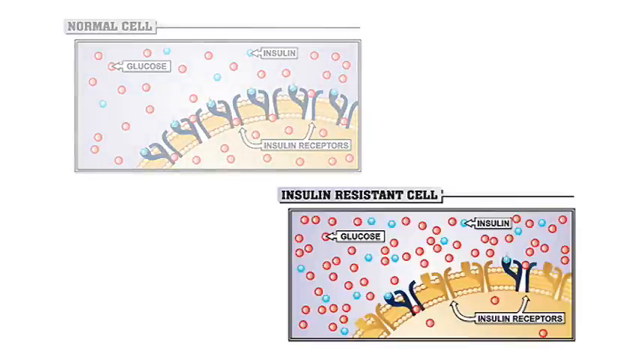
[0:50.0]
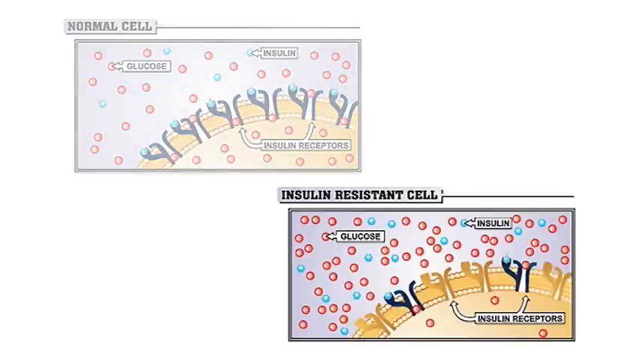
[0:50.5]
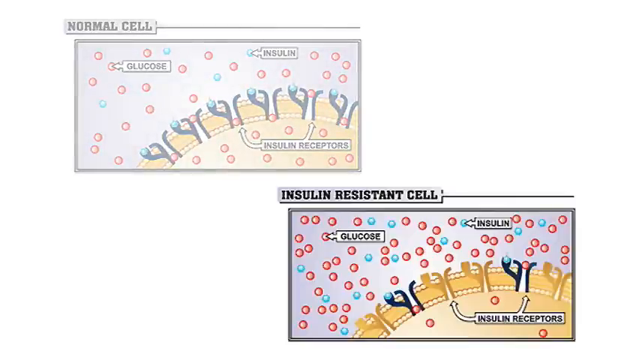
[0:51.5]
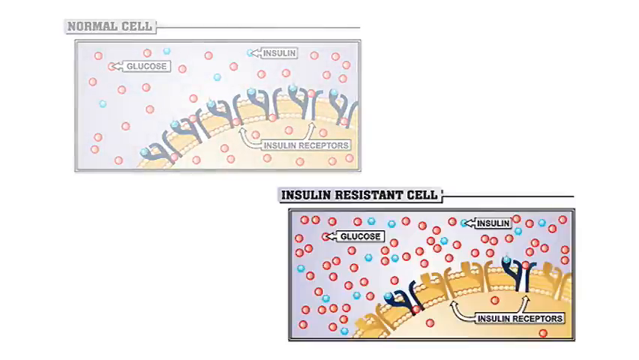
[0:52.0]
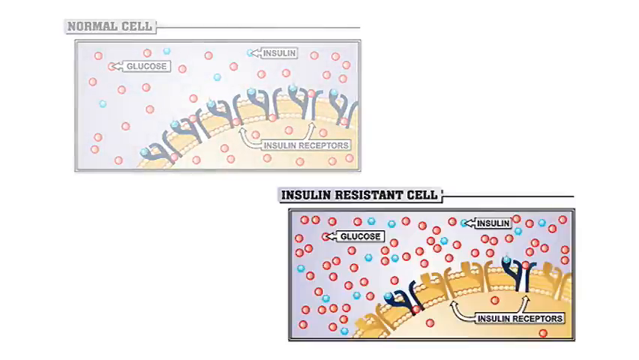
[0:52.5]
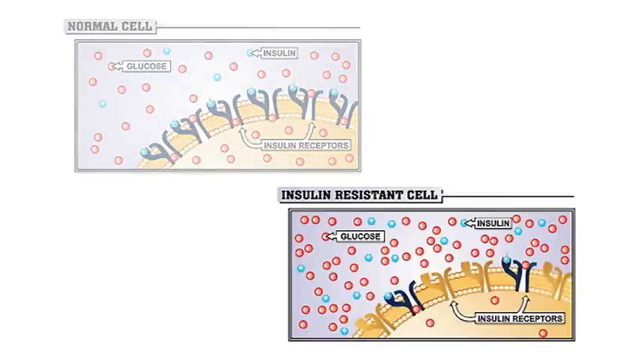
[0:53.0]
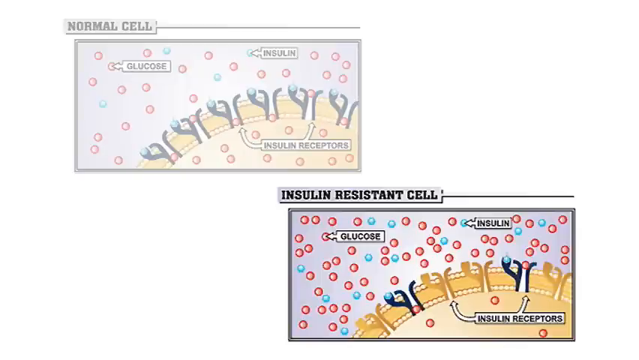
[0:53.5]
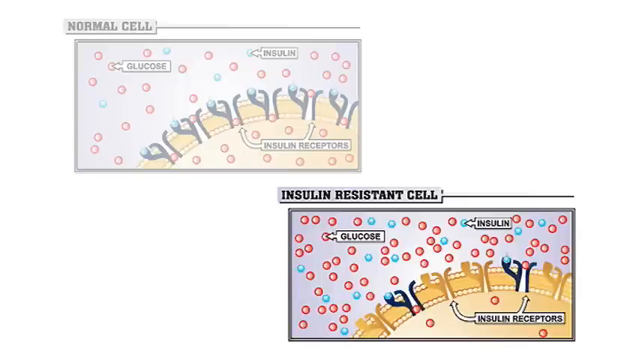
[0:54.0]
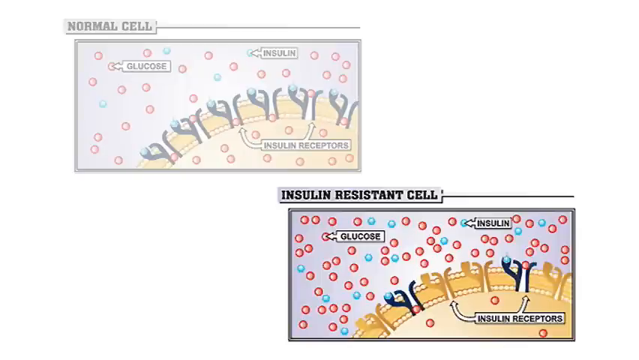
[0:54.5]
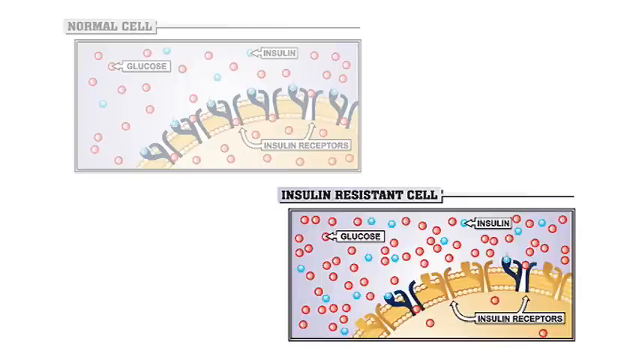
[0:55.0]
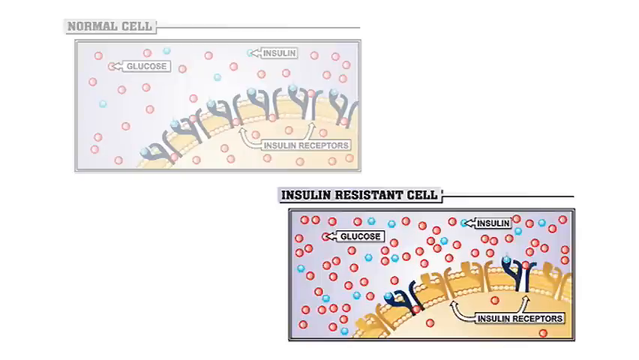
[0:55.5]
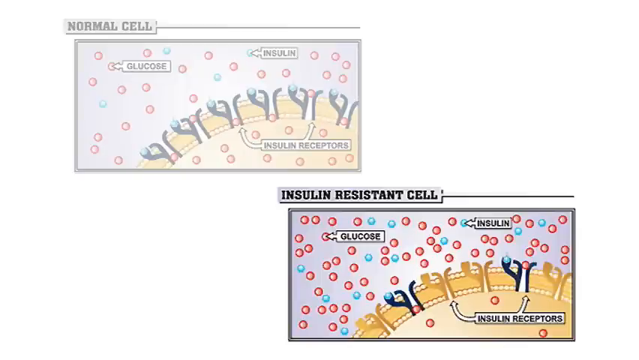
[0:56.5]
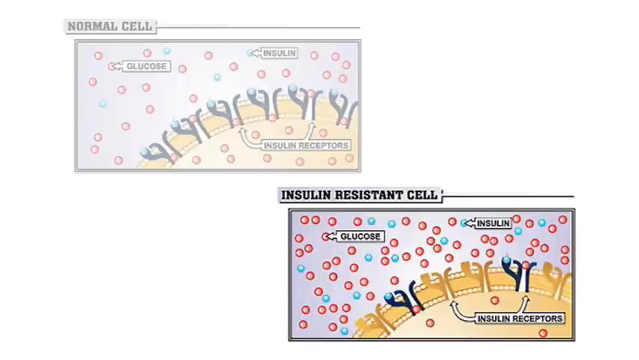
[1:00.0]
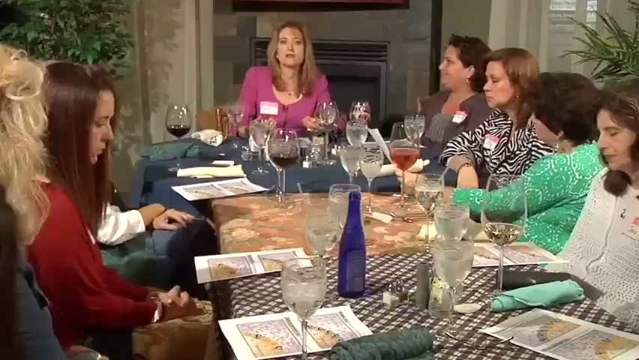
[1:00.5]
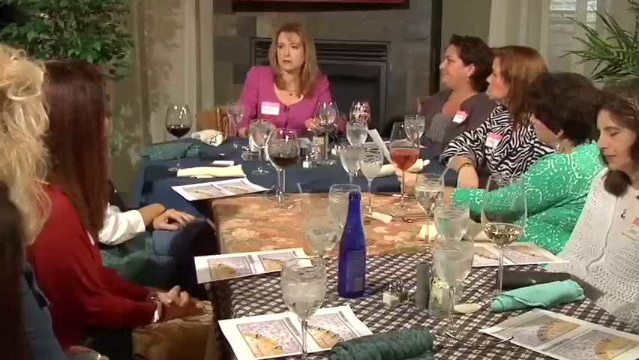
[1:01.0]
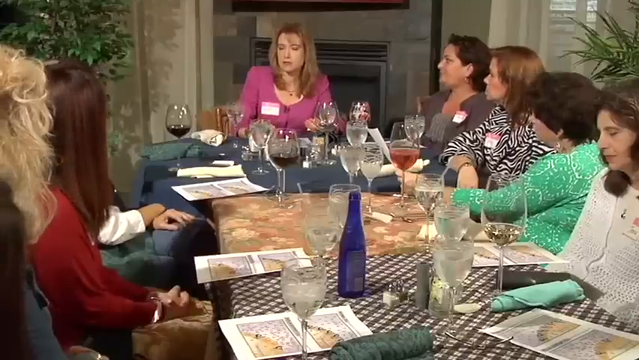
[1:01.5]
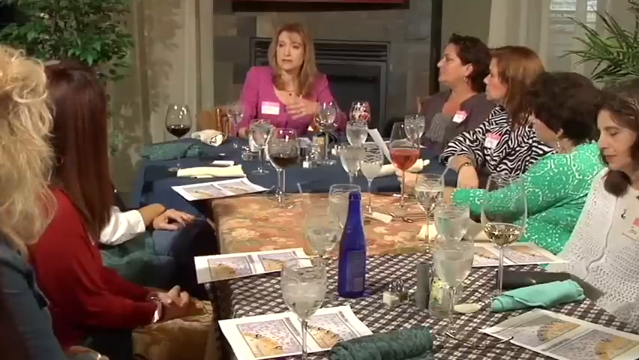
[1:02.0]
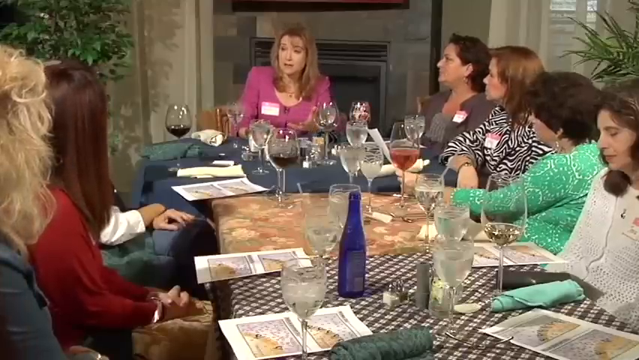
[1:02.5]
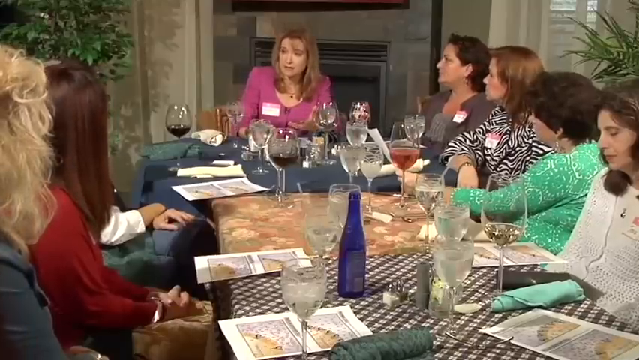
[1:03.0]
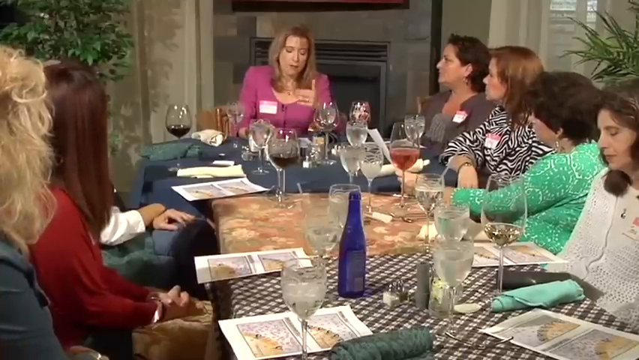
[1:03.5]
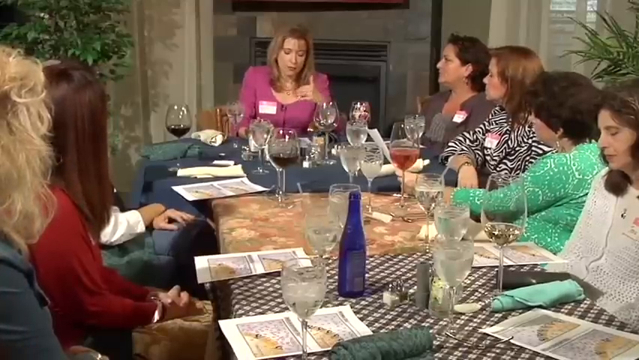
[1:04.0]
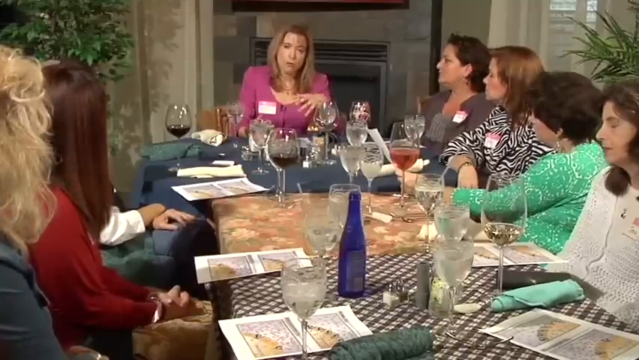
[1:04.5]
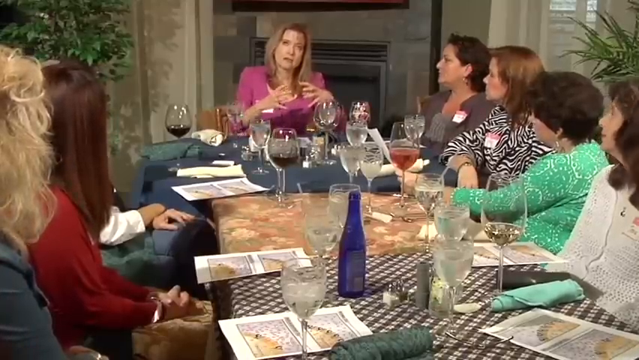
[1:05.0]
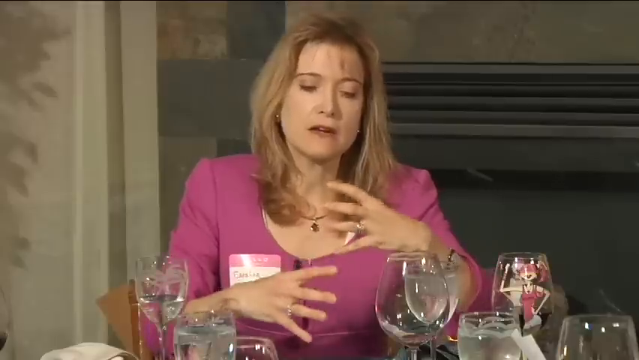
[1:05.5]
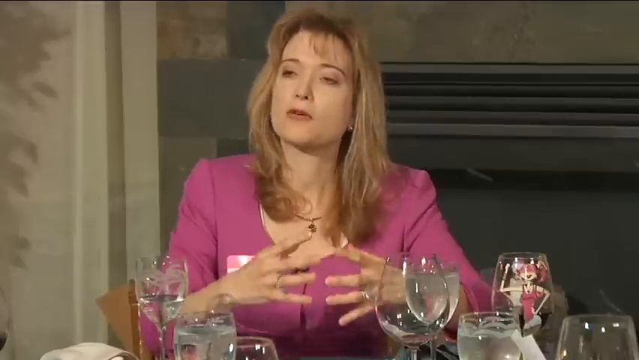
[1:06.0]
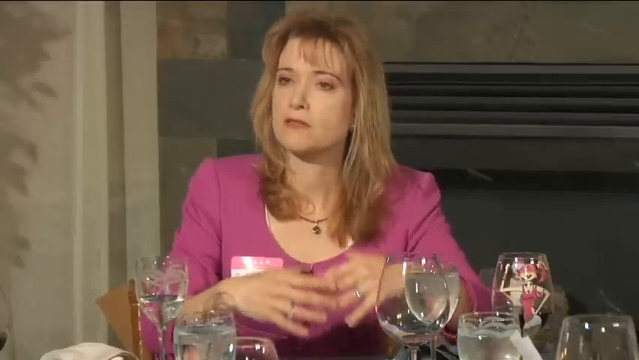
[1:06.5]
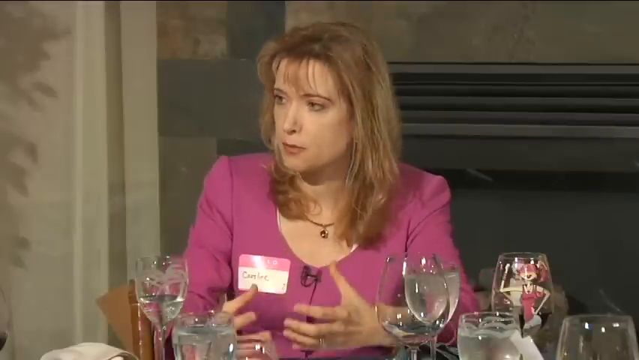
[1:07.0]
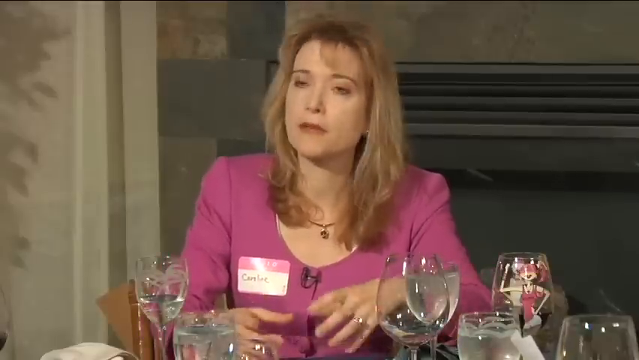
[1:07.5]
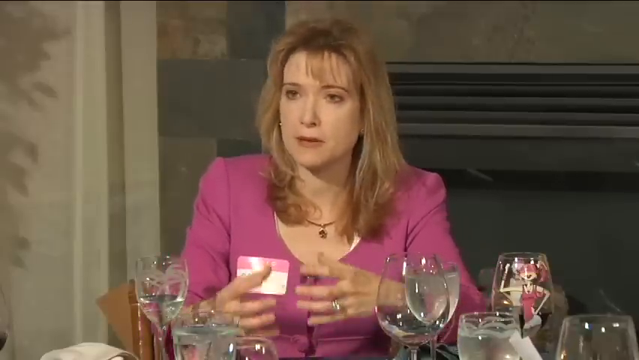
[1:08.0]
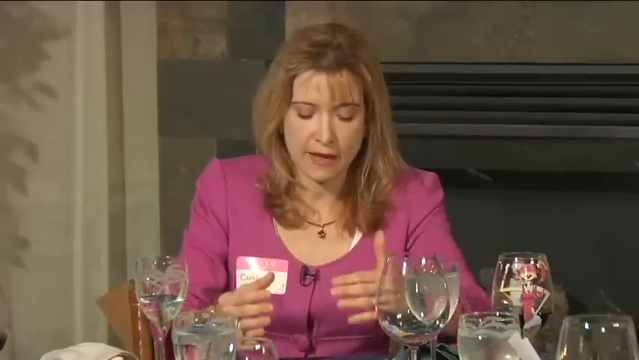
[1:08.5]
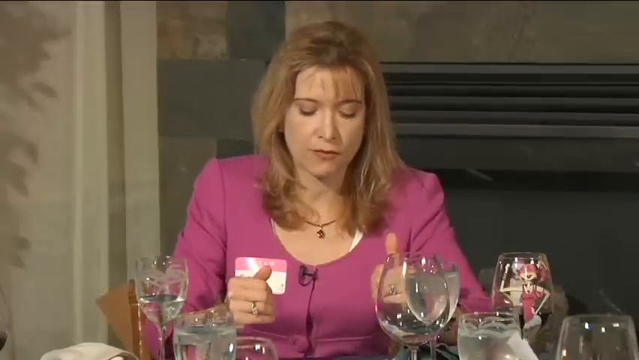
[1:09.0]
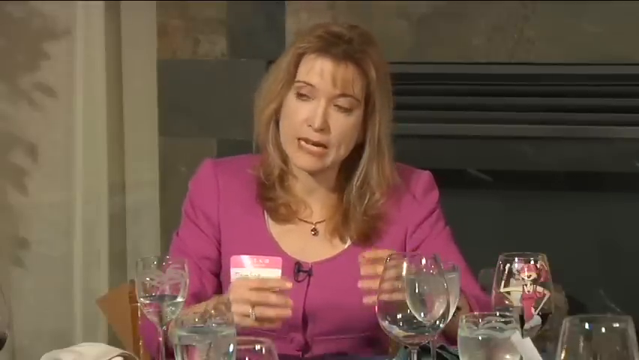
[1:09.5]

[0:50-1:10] Two banners are on the screen: one in the upper left shows the normal blood cell, and one in the lower right shows the insulin resistance cell. Each shows the glucose cell, the insulin cell and the insulin receptors of a blood cell. The video transitions to a group of women sitting around a large dinner table, apparently in a restaurant or possibly someone's home. The woman at the head of the table, at the very far end, does the talking and kind of moves her hands around in front of her. She wears a dark pink top with a name tag sticker on the front of her shirt. Several women sit on each side of the table, and all have glasses in front of them; some hold red wine, some white wine, and some apparently water.